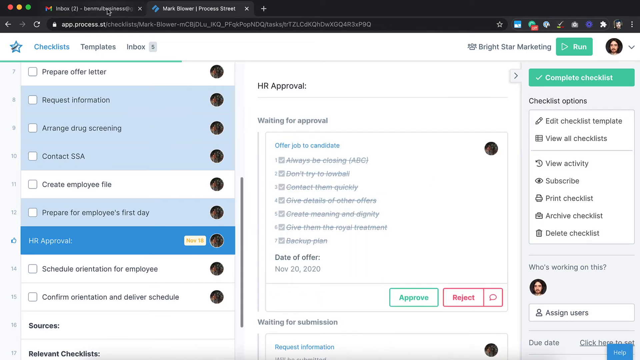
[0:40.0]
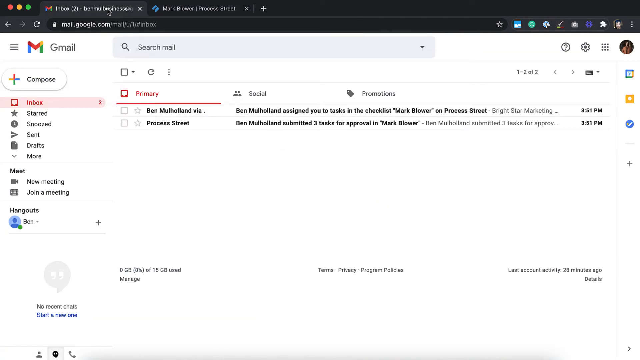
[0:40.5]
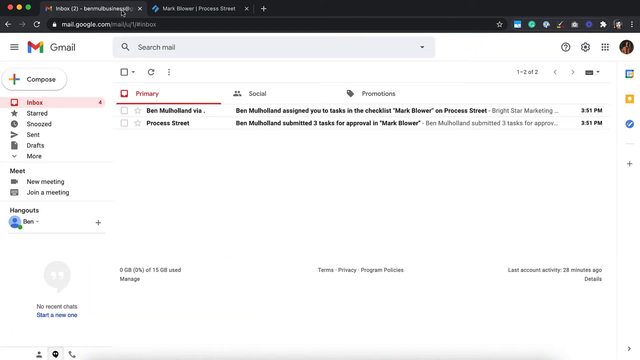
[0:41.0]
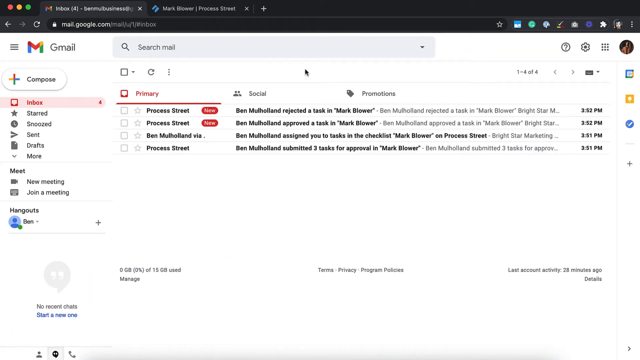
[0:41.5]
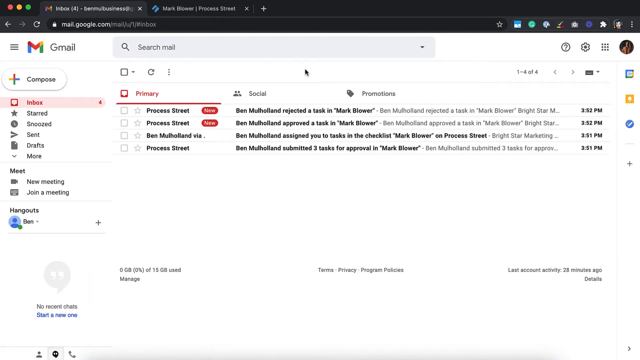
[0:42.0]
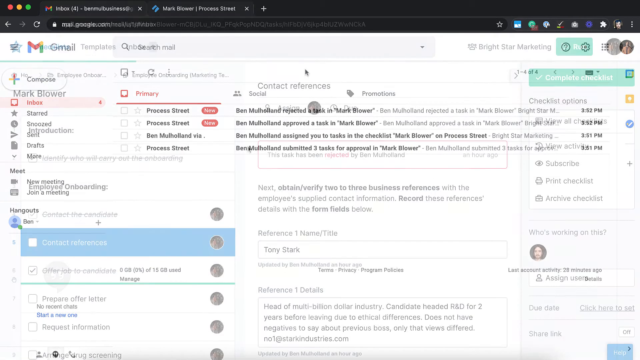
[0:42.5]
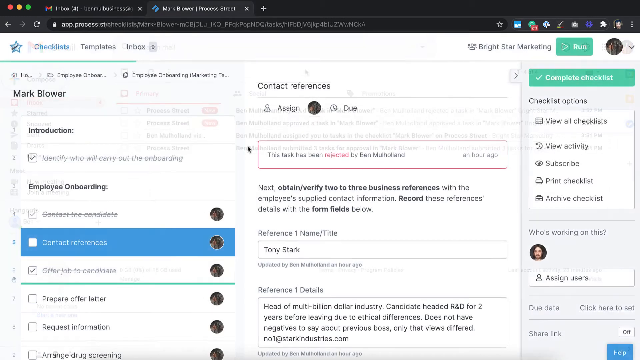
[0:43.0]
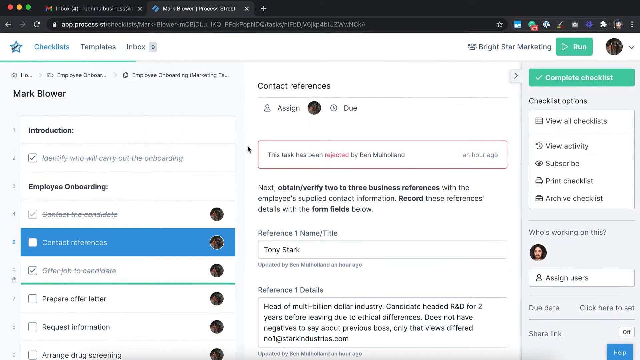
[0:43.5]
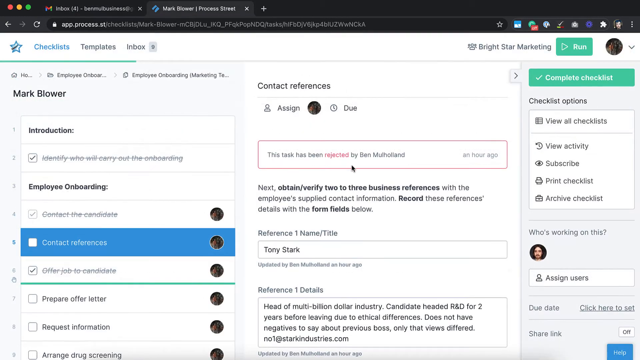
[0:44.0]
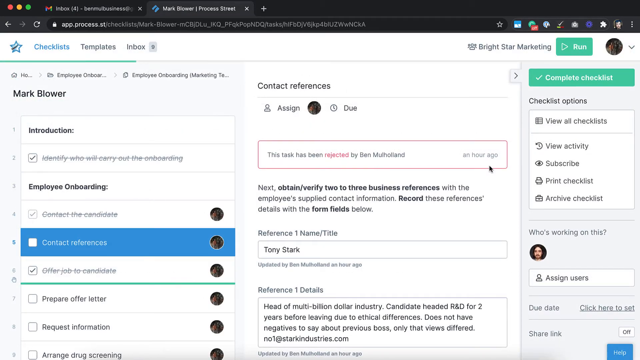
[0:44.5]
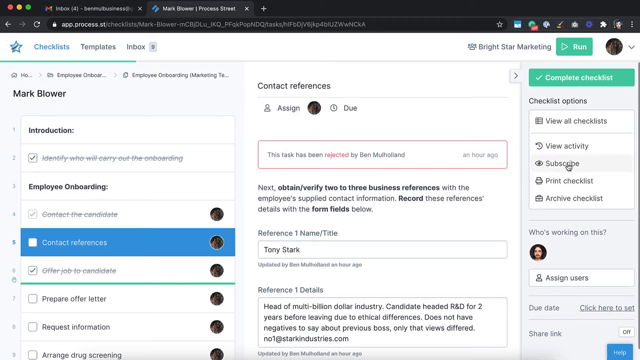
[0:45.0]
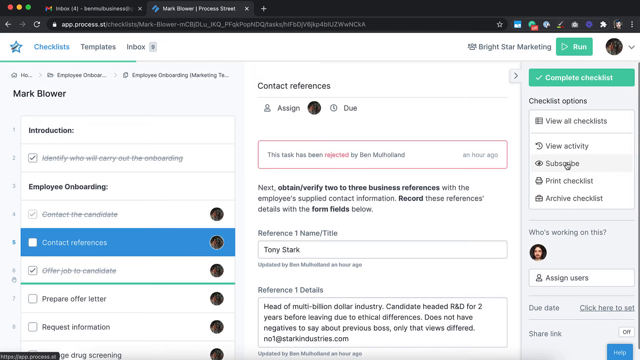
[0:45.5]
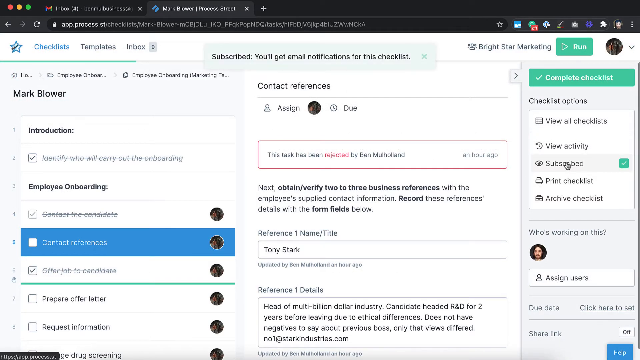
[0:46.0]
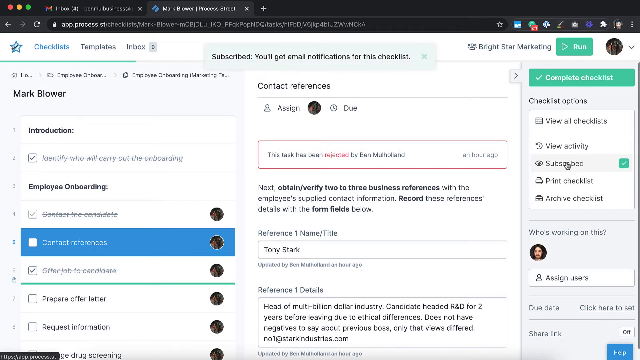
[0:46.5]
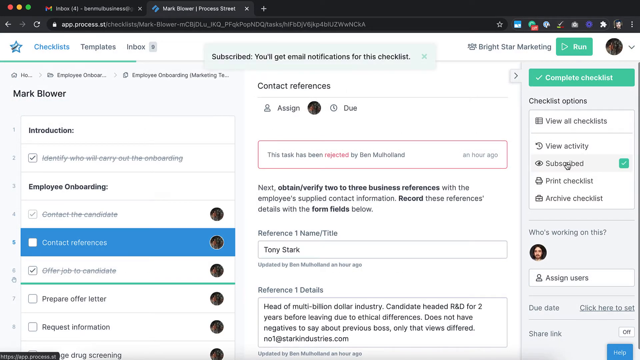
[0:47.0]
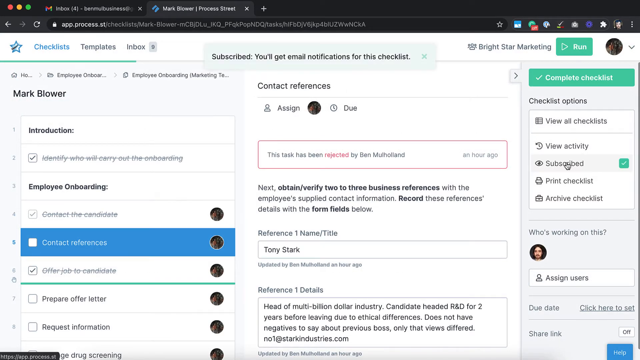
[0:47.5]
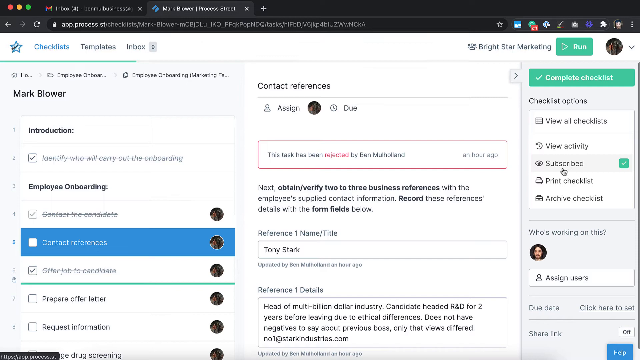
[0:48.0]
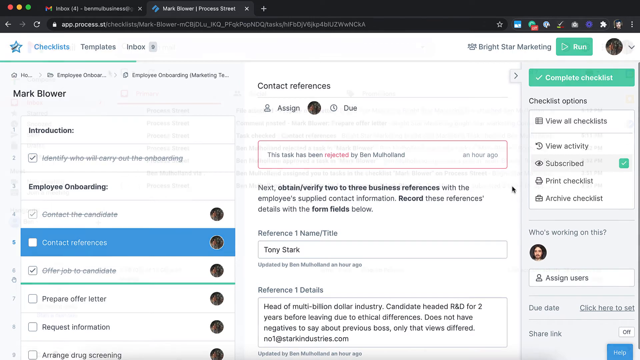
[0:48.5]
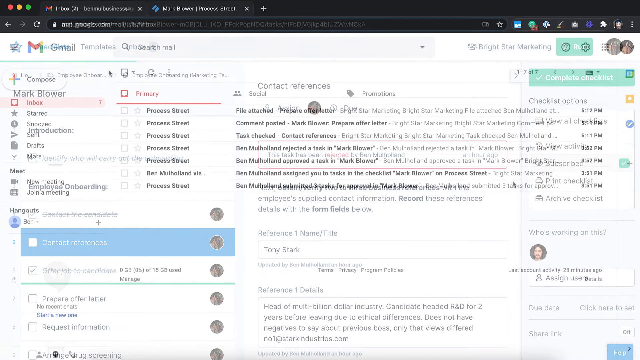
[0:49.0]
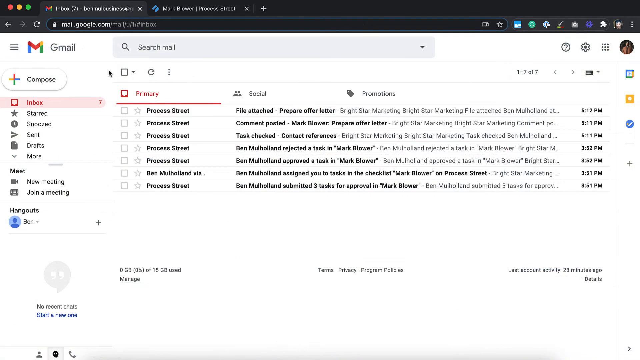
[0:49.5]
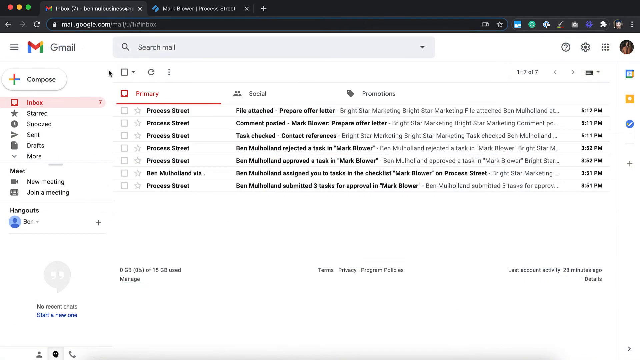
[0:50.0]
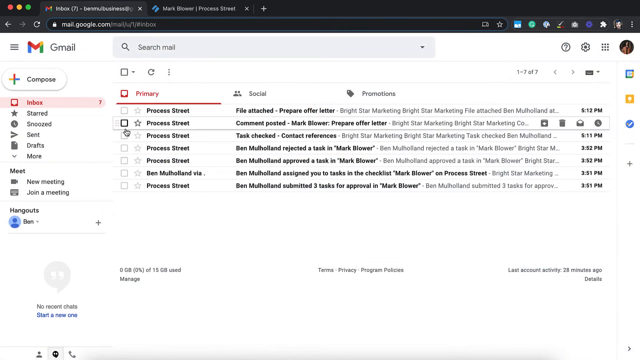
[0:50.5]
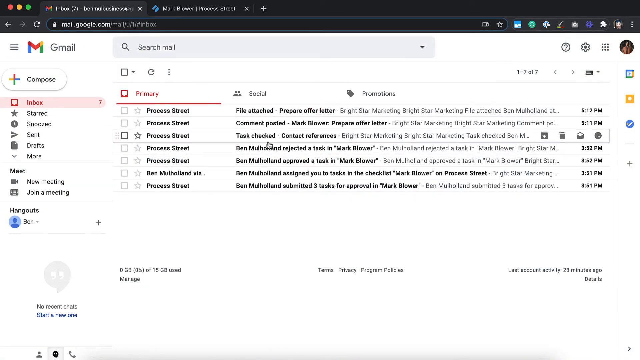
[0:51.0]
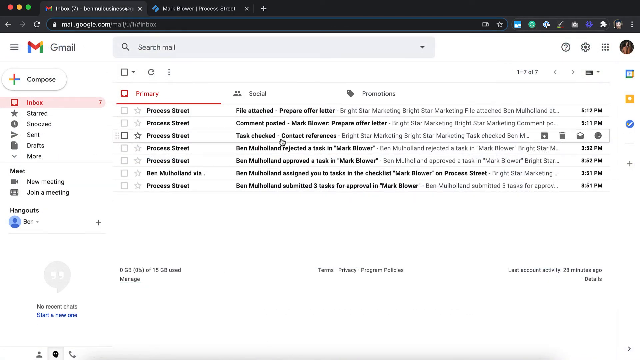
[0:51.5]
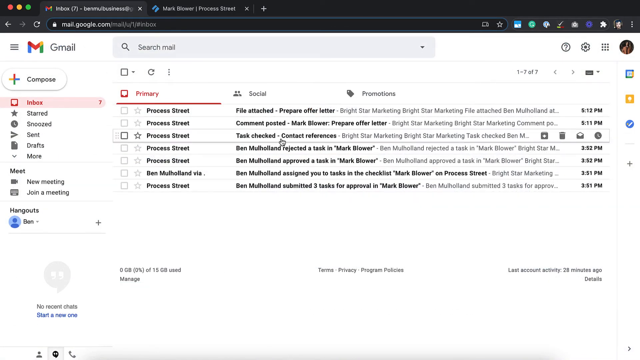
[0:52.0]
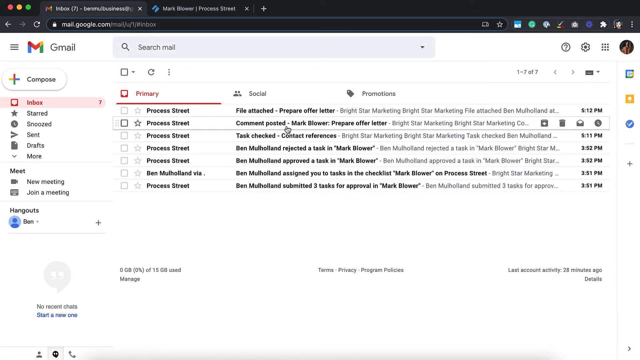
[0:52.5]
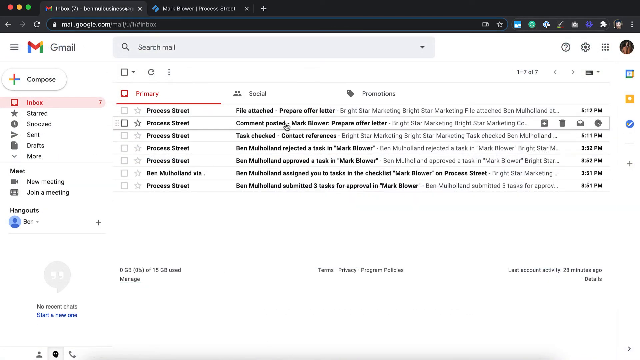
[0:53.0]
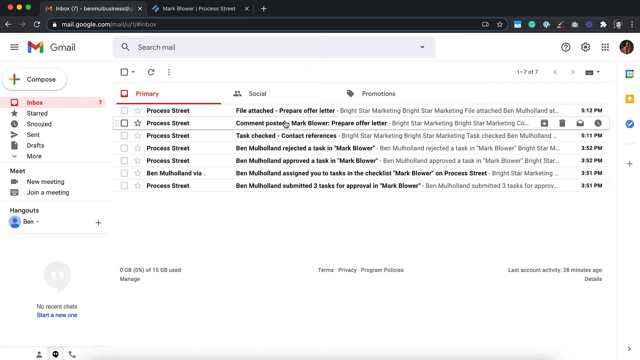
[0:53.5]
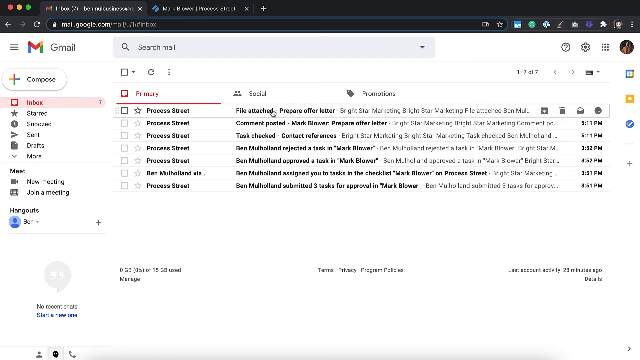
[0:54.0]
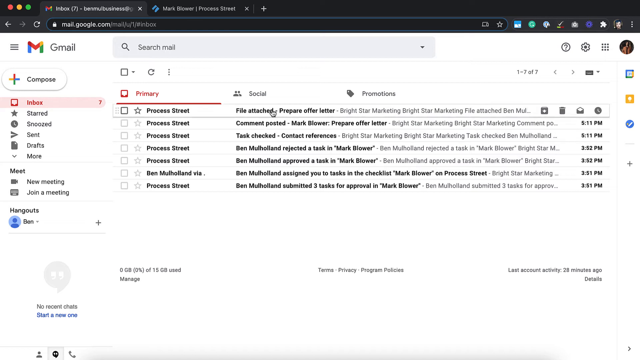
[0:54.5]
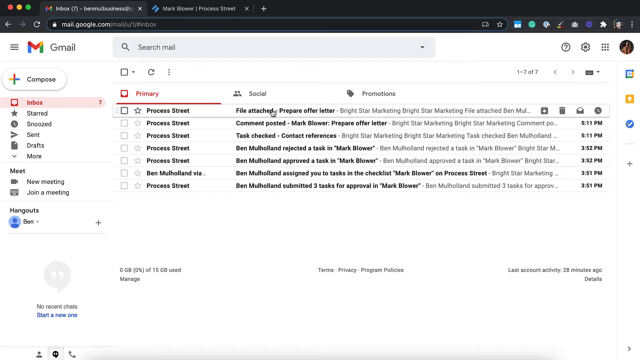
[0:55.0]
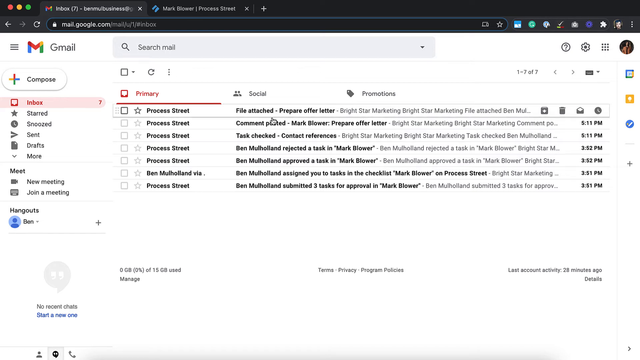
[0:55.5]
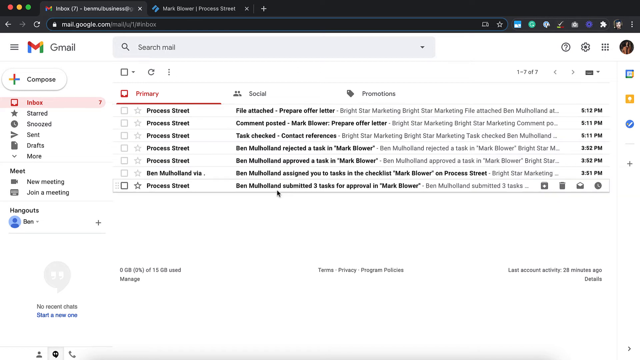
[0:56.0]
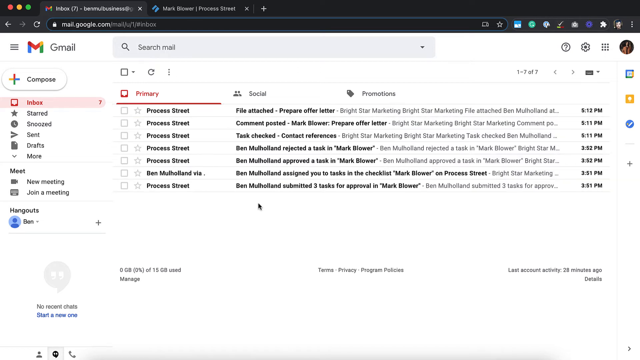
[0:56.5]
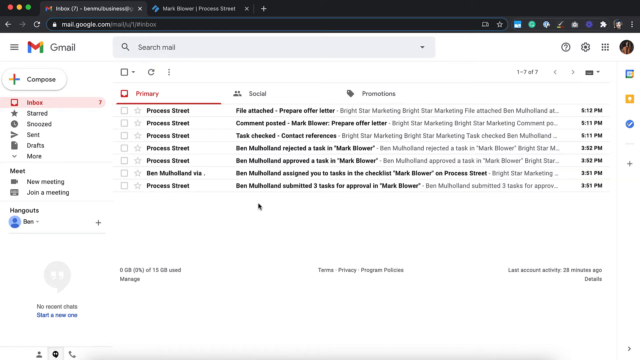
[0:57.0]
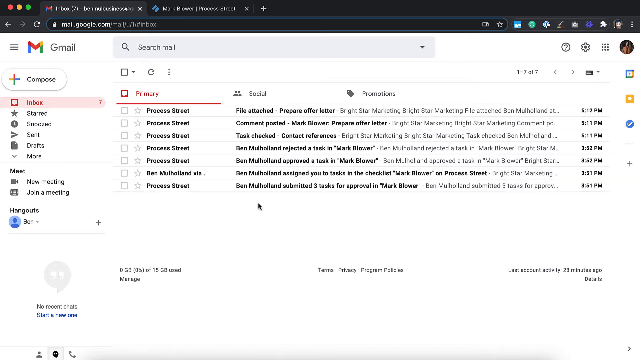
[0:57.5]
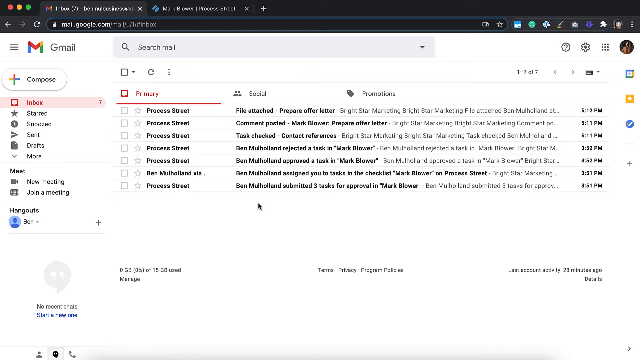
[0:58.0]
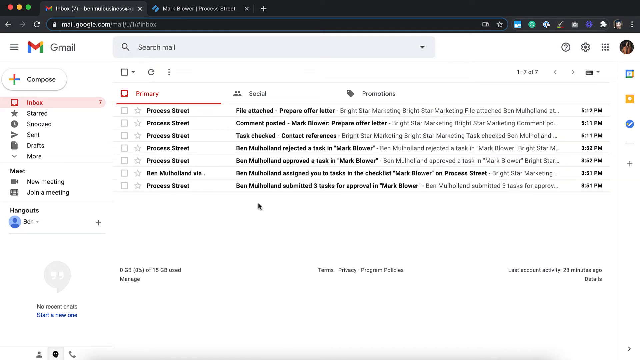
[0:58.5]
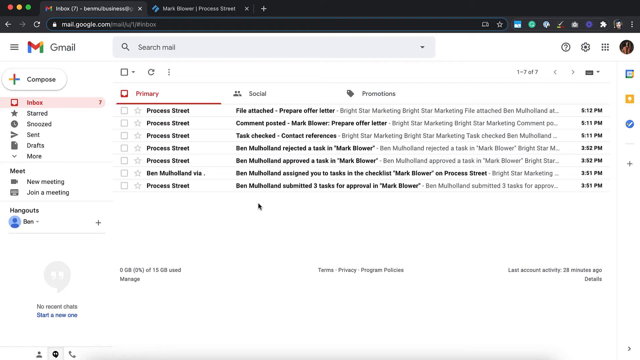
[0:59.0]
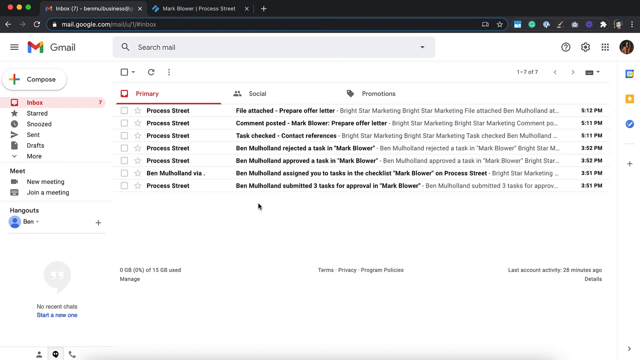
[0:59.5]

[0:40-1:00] A Gmail inbox has the primary tab selected, and it says "your primary tab is empty". The inbox is refreshed, and emails then appear in the primary tab. The browser switches tabs to the tasks website, app.process.st, which apparently imports the tasks into Gmail. The tasks listed include "contact references", "offer job to candidate", which is crossed out, and "contact to candidate", which is also crossed out. The blue highlighted box is "contact references", which has not been checked or crossed out.